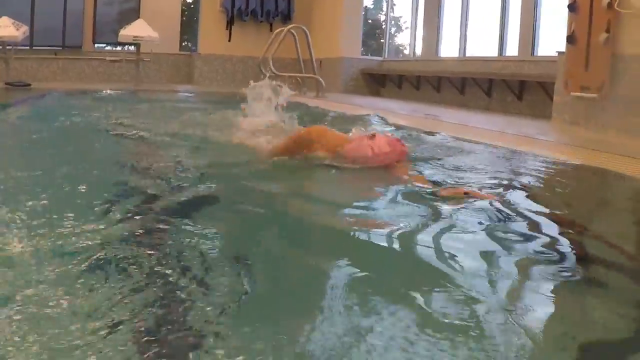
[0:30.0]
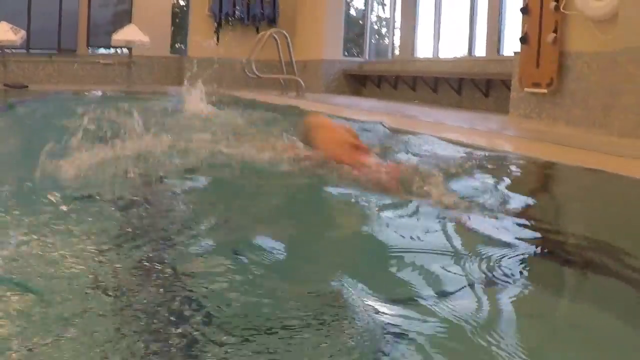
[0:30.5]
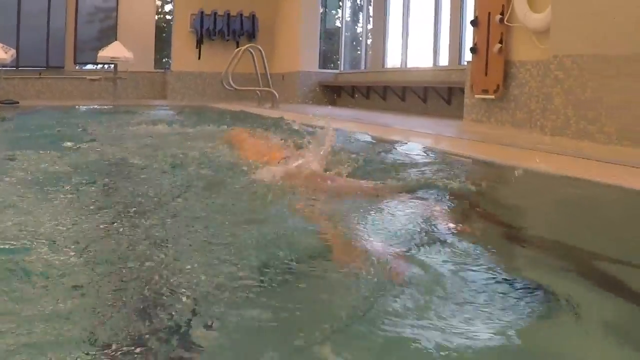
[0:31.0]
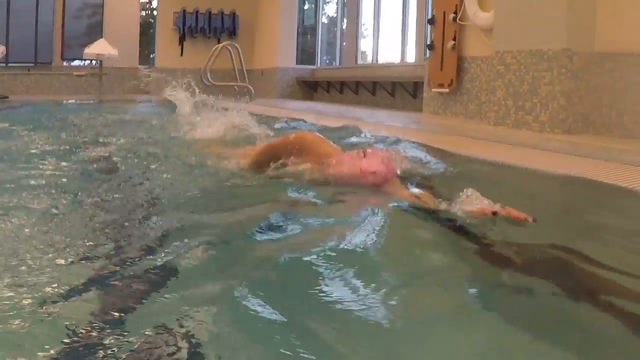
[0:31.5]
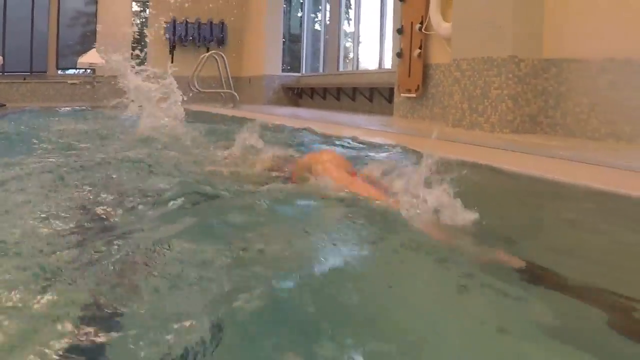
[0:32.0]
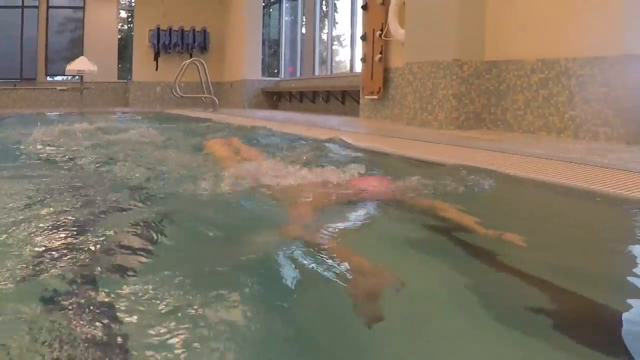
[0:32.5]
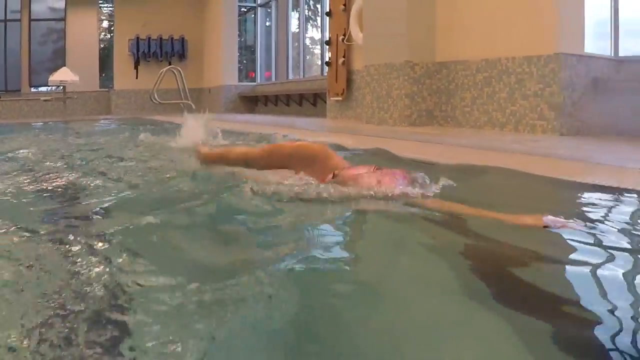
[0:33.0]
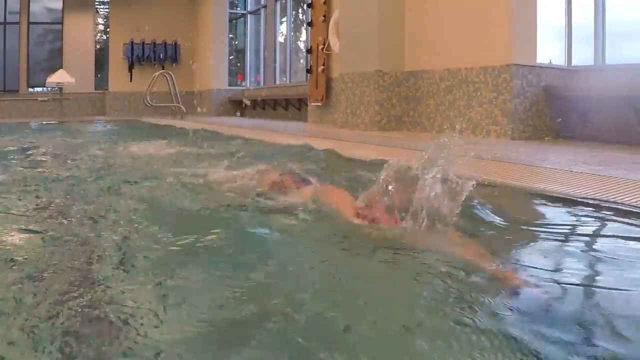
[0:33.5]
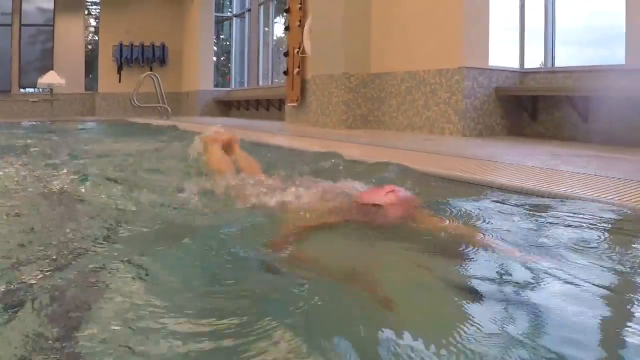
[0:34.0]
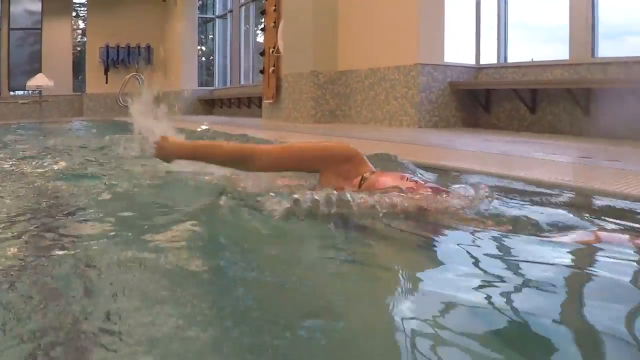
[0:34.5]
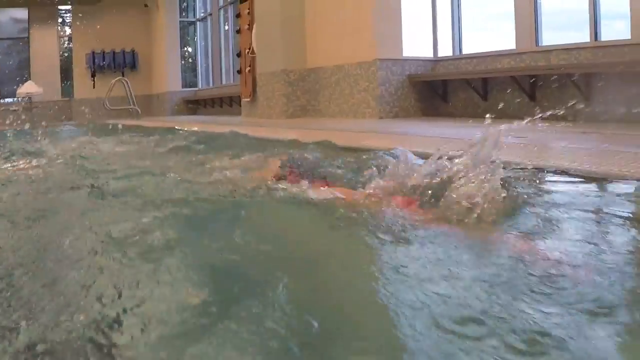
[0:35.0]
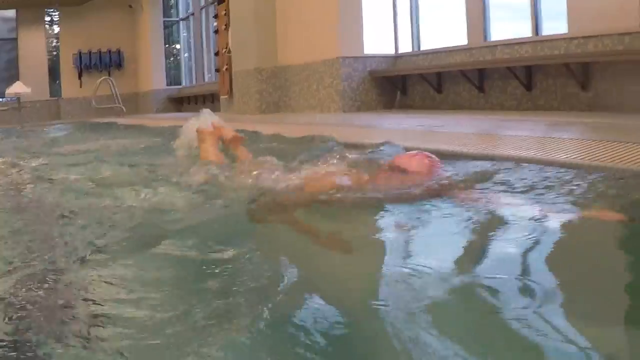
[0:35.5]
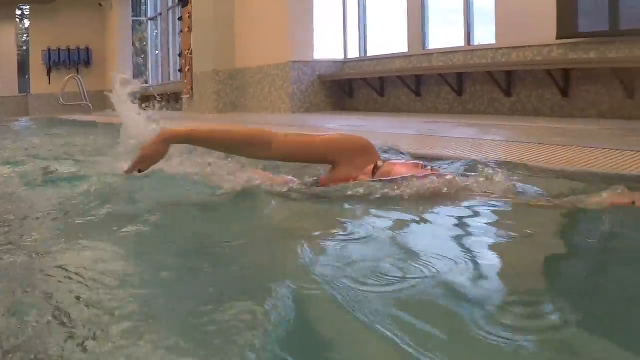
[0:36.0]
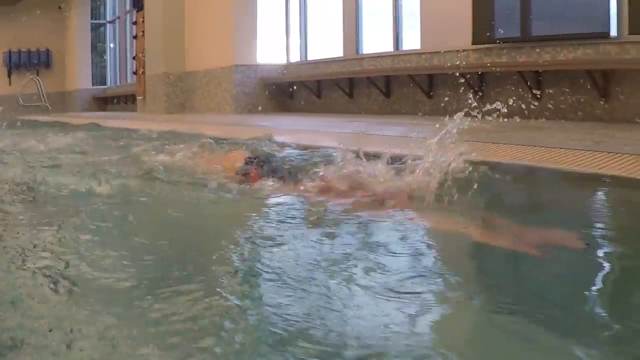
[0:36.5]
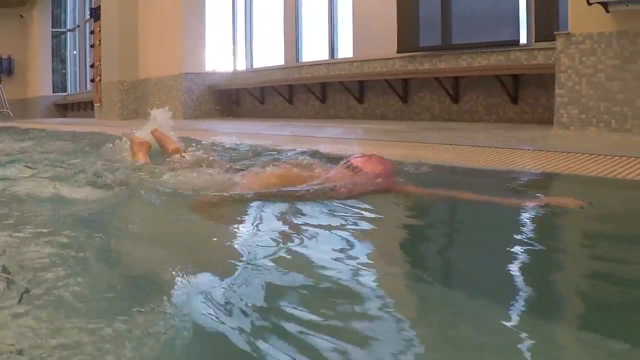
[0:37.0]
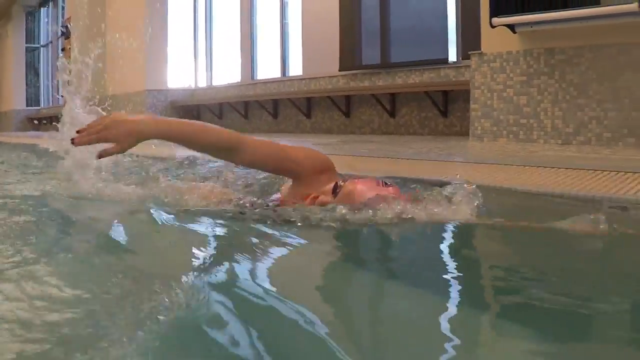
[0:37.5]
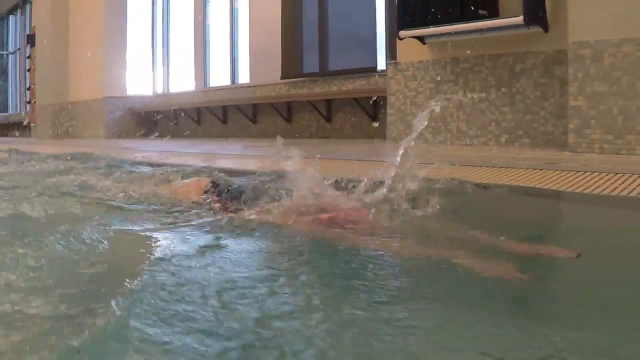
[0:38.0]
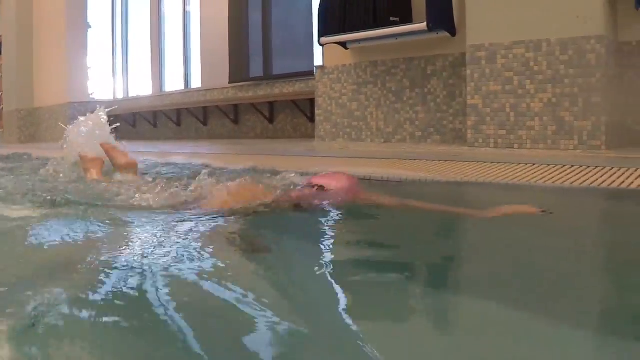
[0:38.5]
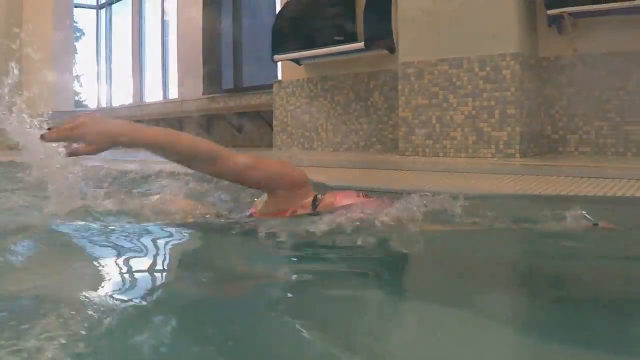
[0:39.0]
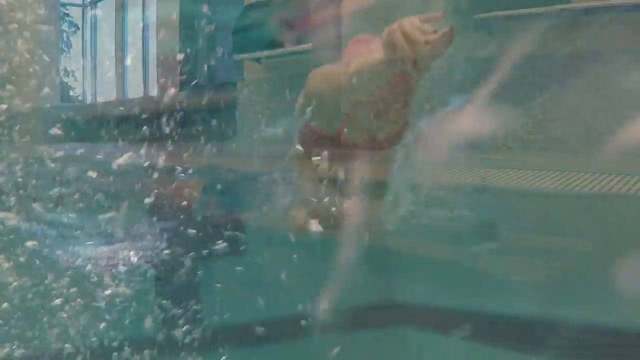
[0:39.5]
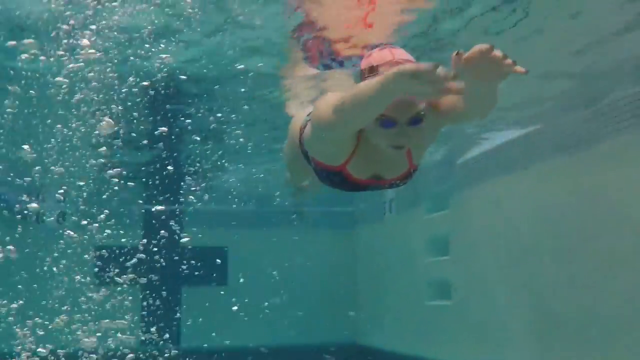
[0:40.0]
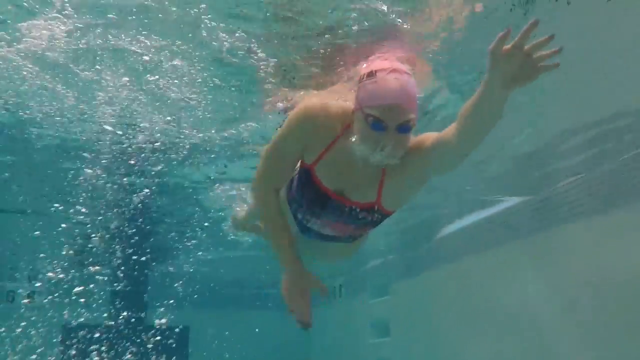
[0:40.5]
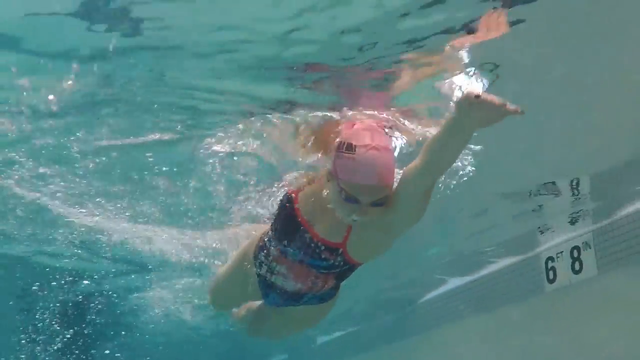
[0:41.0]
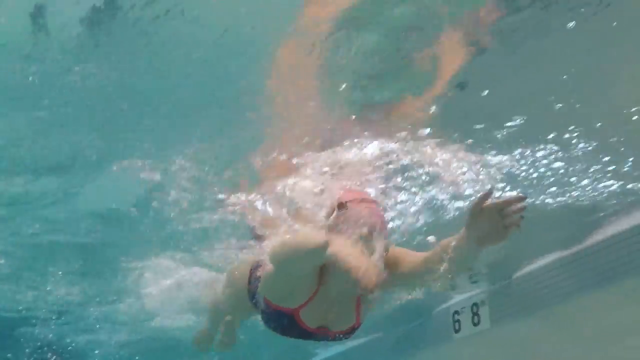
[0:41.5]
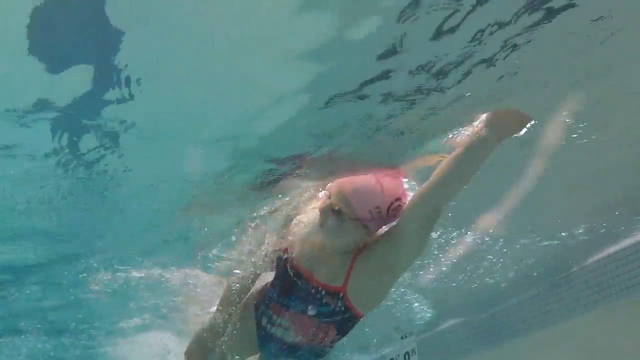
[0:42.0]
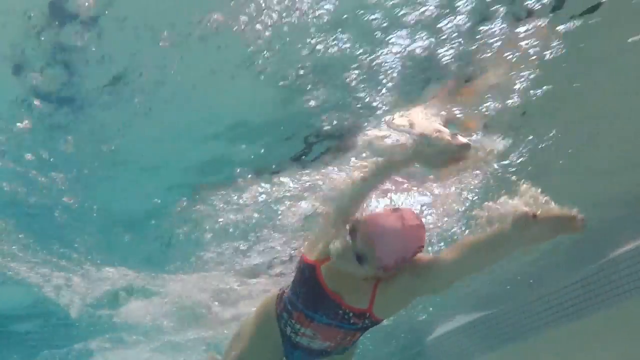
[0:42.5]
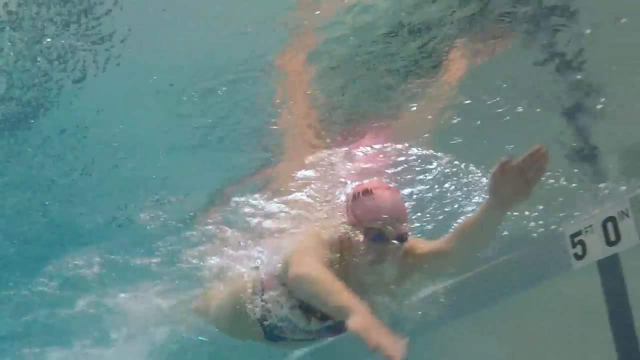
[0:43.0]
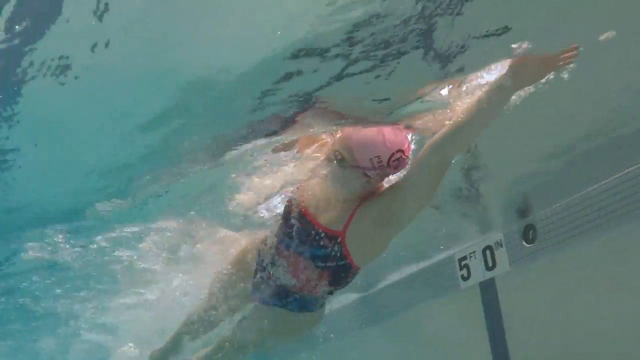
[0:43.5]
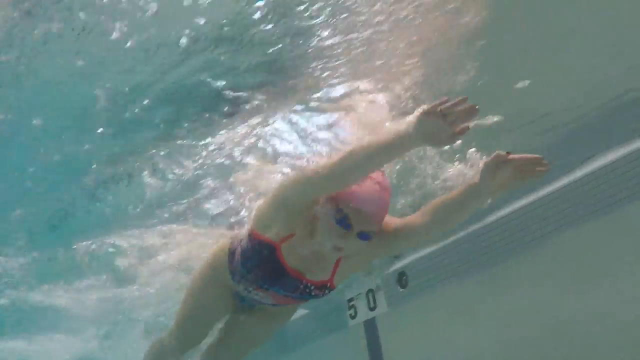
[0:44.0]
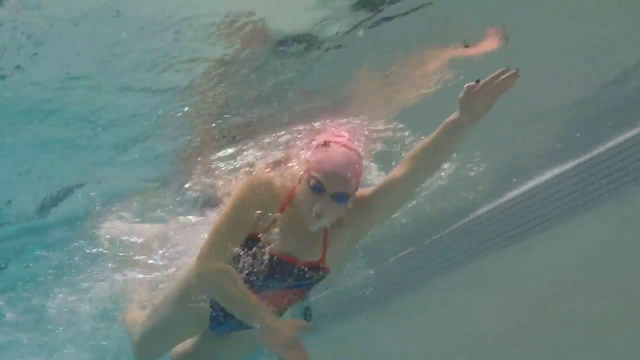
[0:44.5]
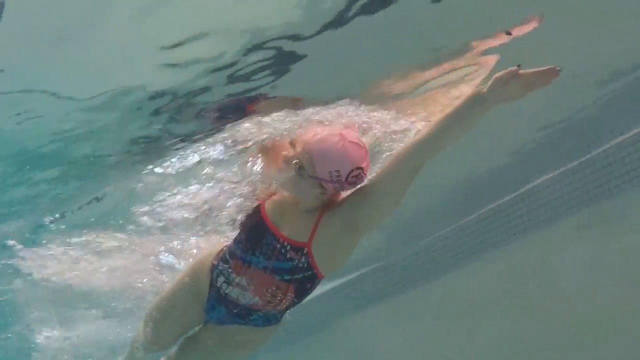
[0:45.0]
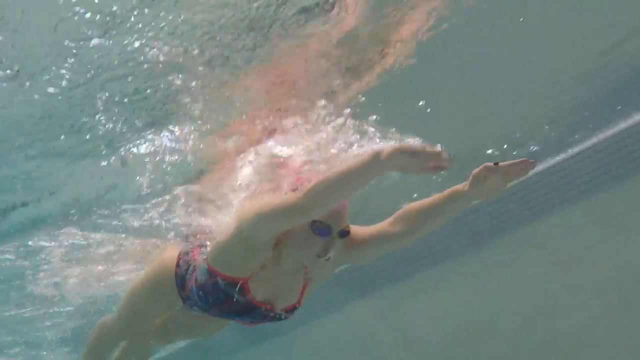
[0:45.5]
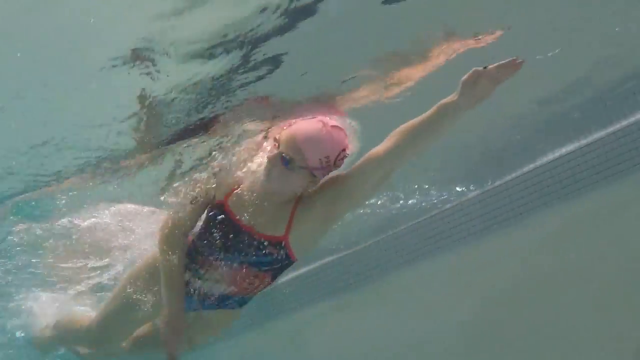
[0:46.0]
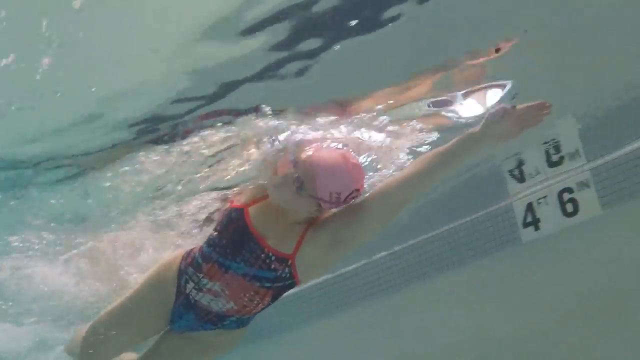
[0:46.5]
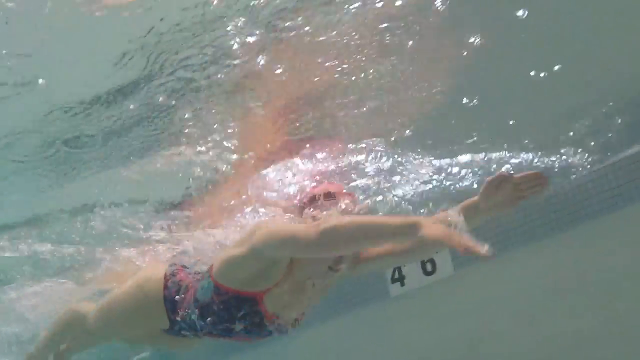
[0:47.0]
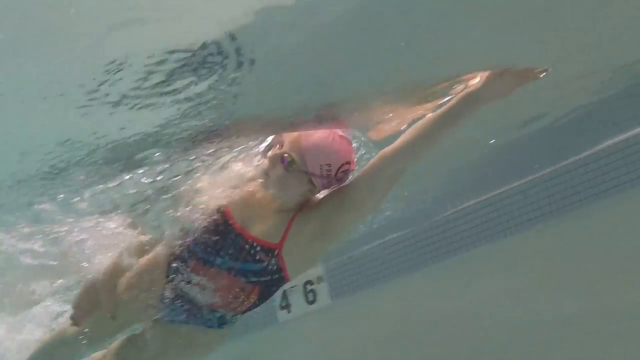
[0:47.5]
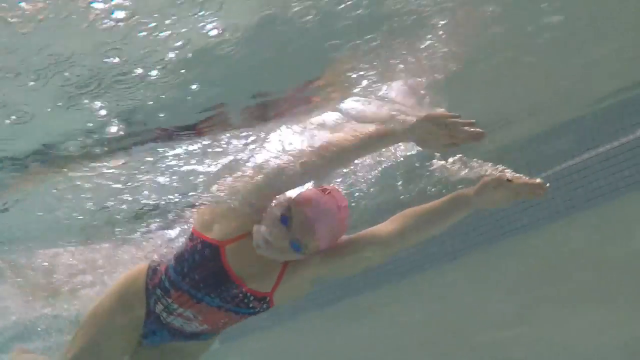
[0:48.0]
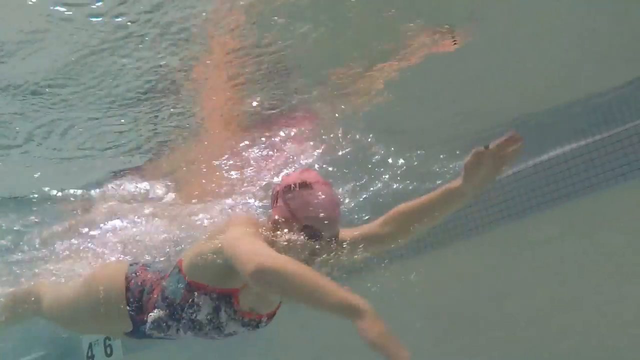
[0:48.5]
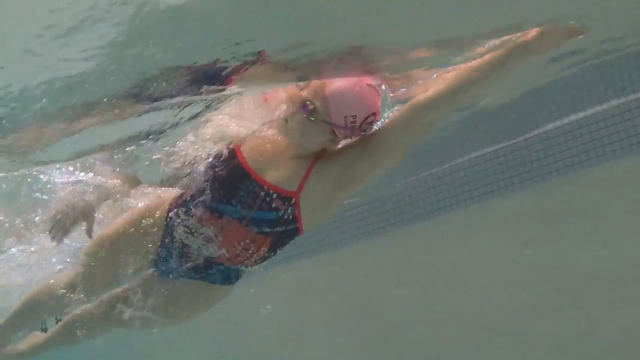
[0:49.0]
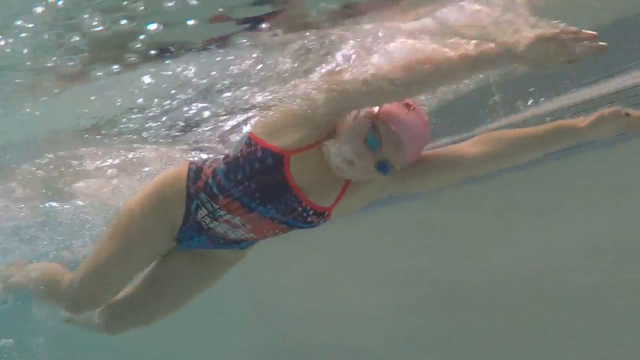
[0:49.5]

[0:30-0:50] The swimmer is shown doing some regular swimming, and, after jumping off the block and before taking a breath, an underwater stroke in which she looks kind of like an earthworm. She then swims freestyle in an indoor Olympic-sized pool where the water comes right up to the top and laps over the edge. She swims freestyle using only one arm, probably to strengthen it, with her left arm straight out. She wears swim goggles, a pink cap and a one-piece maillot that is kind of dark blue with hot pink trim and designs that look blue and pink. There is also a broken, kind of black line around her swim cap. Her goggles are black with a white piece across the nose.